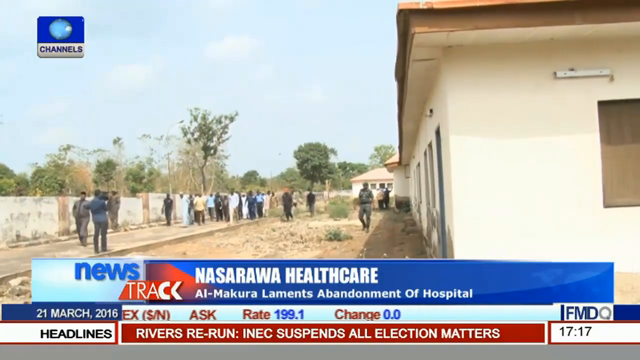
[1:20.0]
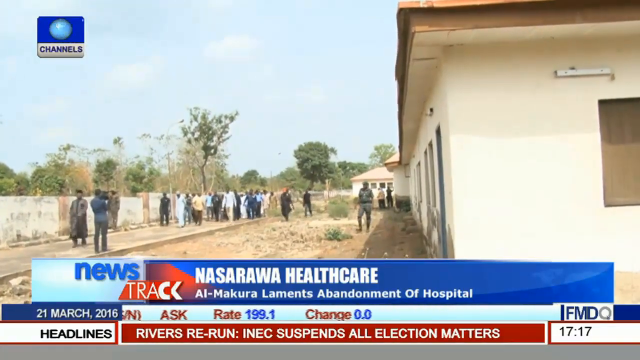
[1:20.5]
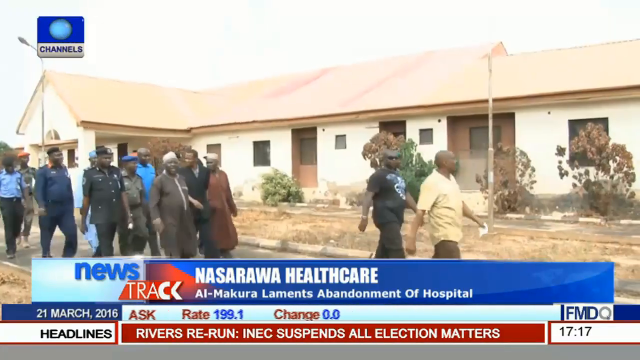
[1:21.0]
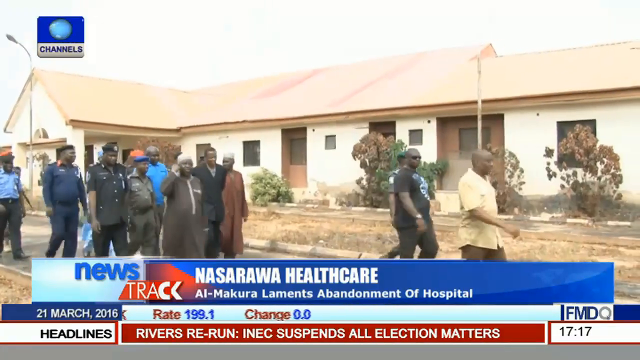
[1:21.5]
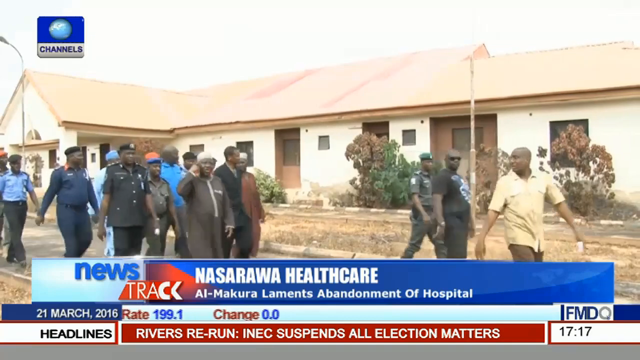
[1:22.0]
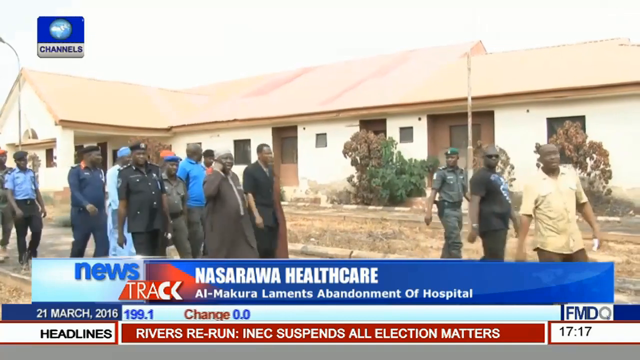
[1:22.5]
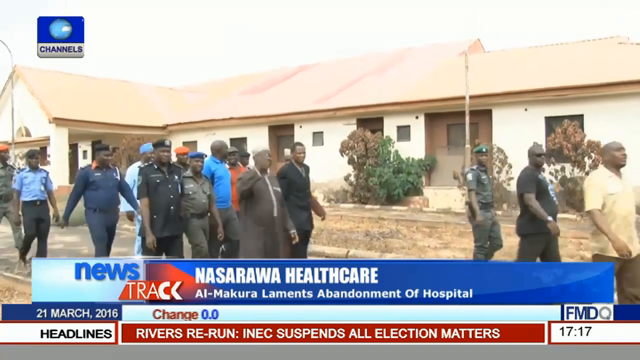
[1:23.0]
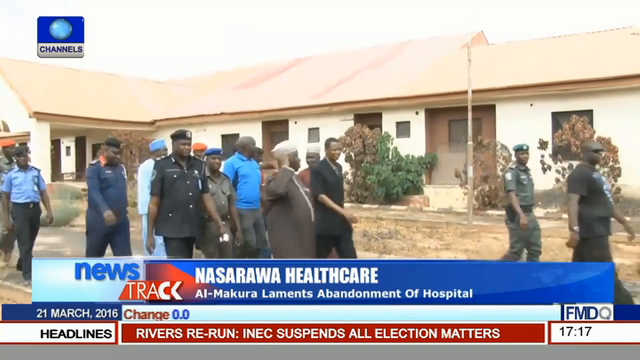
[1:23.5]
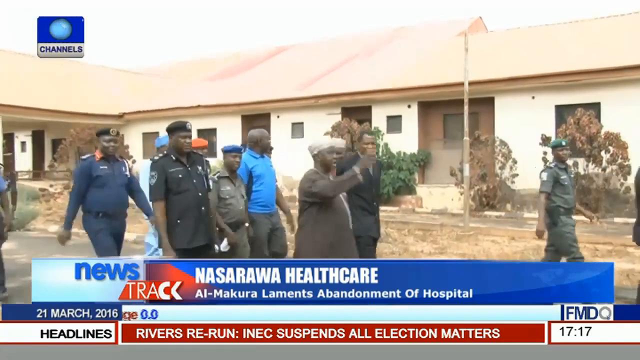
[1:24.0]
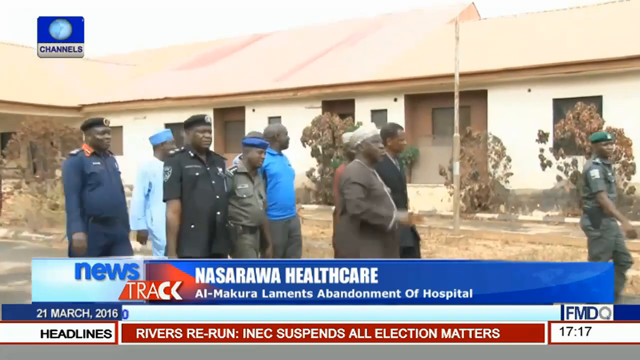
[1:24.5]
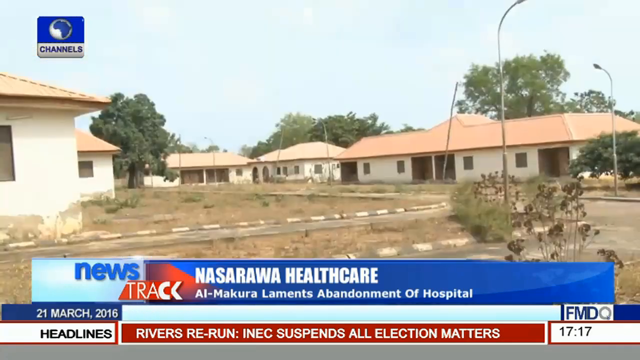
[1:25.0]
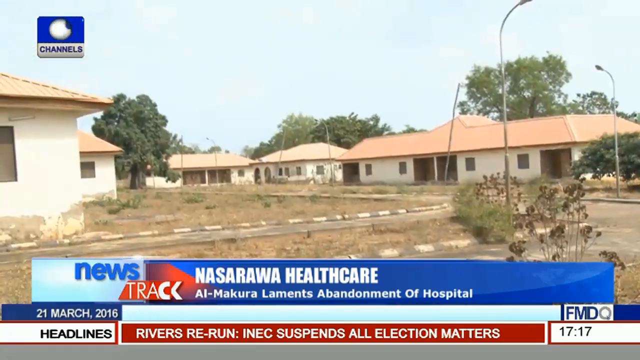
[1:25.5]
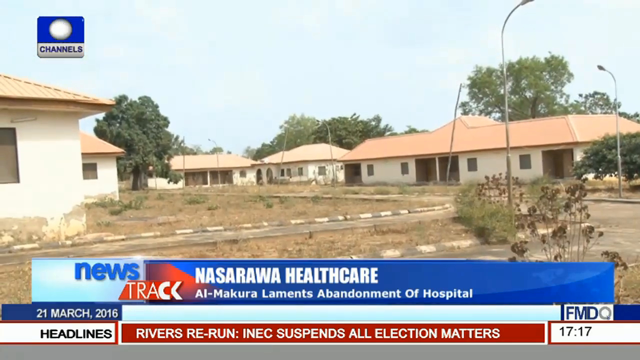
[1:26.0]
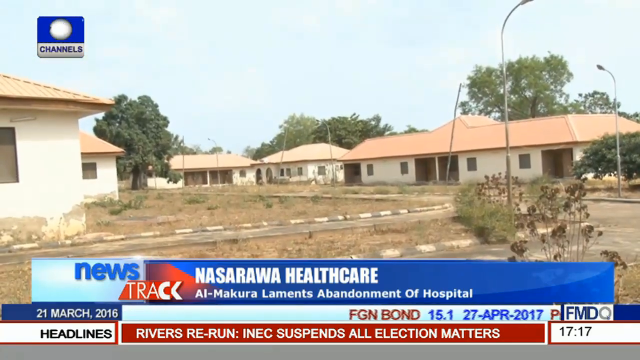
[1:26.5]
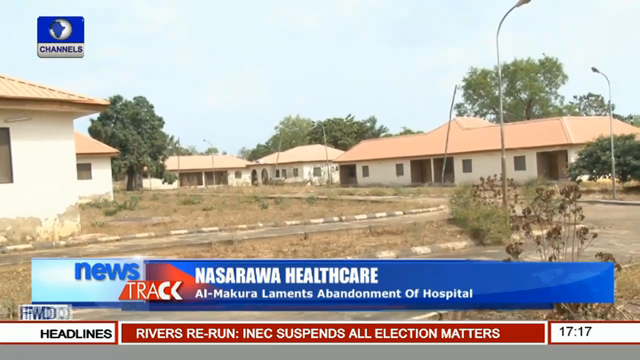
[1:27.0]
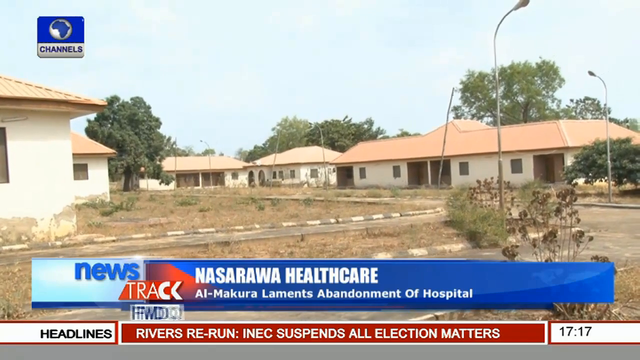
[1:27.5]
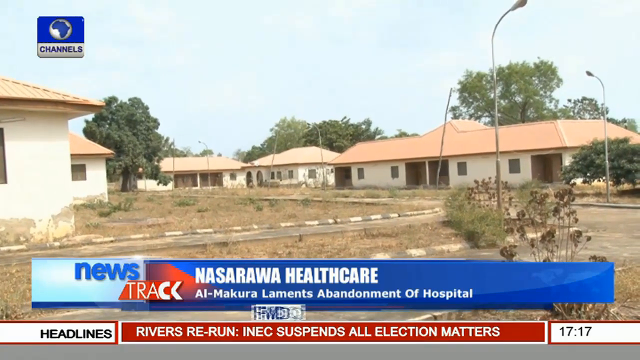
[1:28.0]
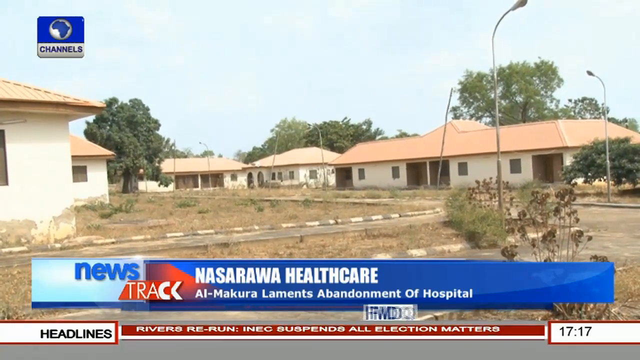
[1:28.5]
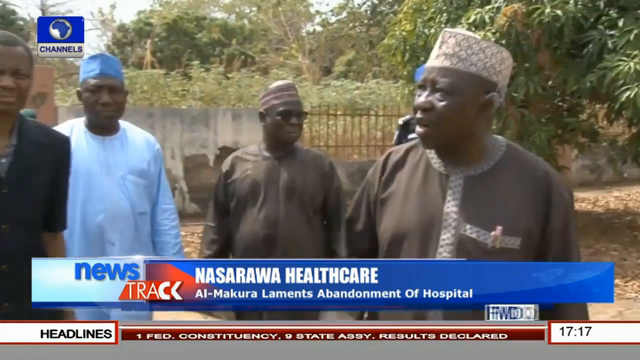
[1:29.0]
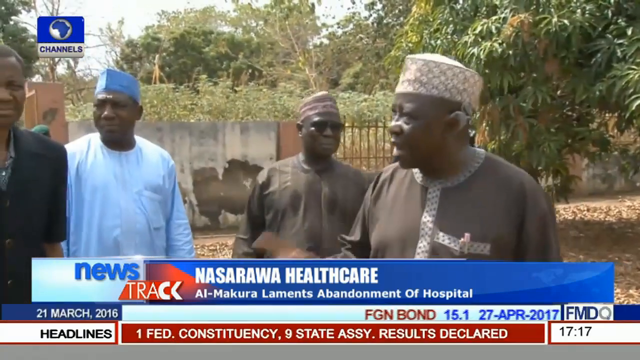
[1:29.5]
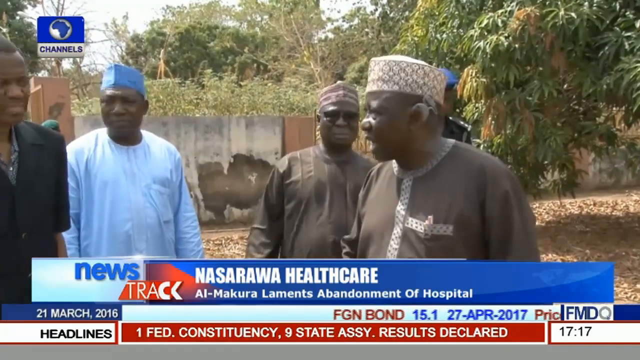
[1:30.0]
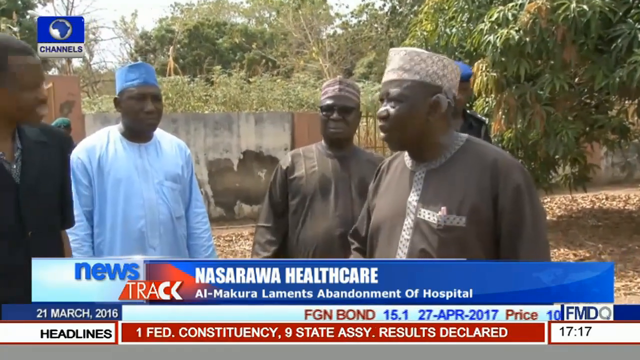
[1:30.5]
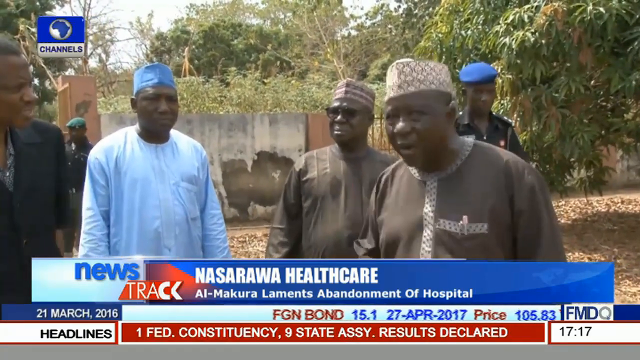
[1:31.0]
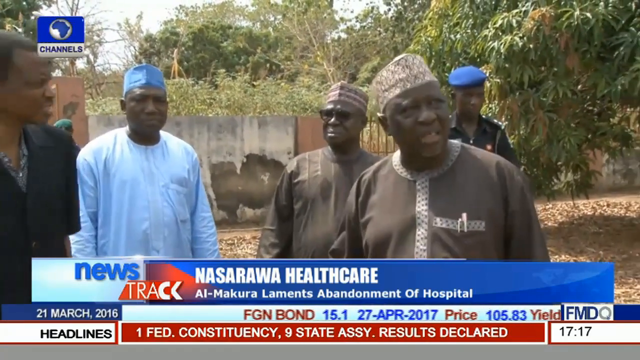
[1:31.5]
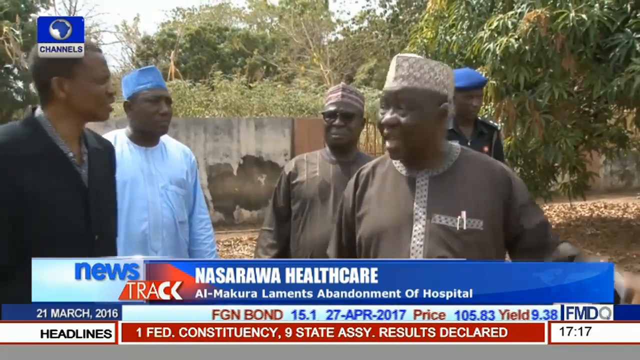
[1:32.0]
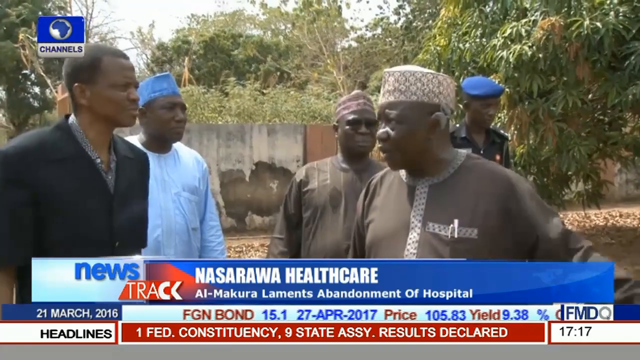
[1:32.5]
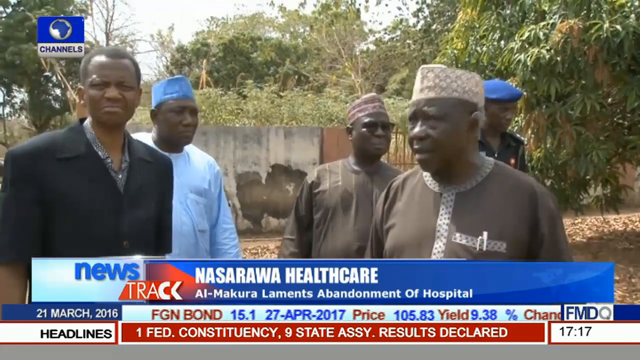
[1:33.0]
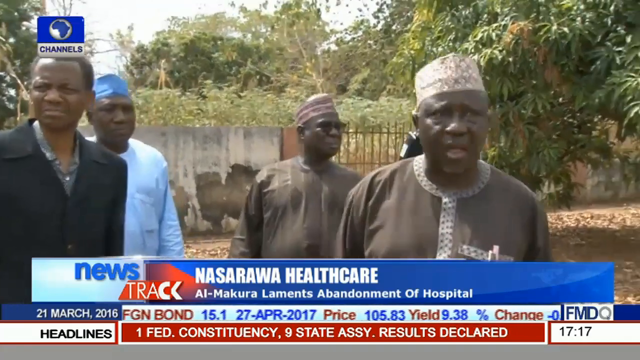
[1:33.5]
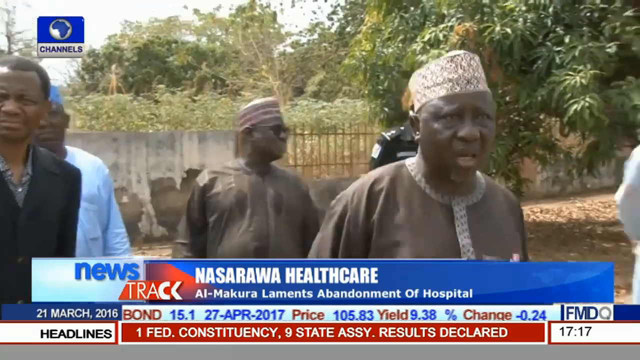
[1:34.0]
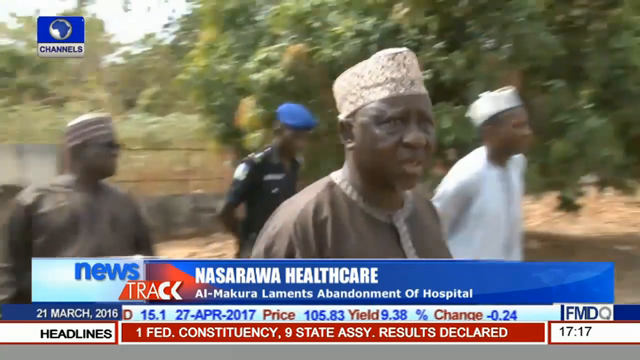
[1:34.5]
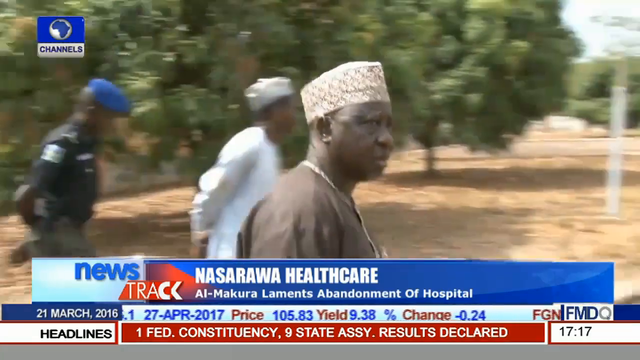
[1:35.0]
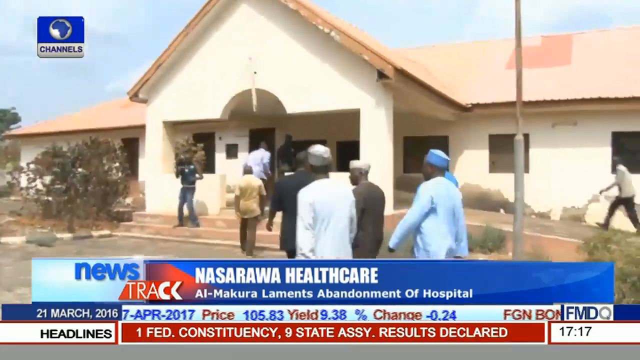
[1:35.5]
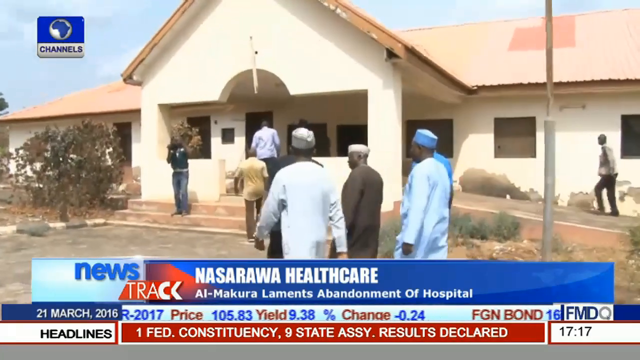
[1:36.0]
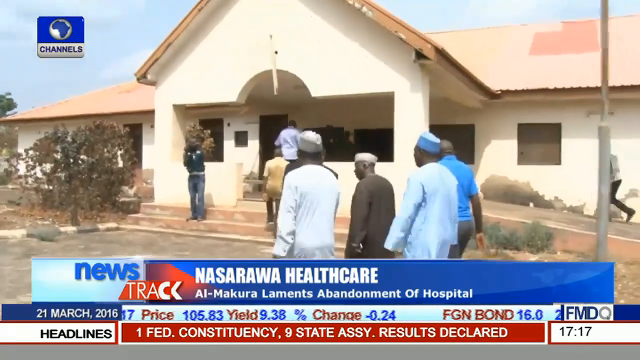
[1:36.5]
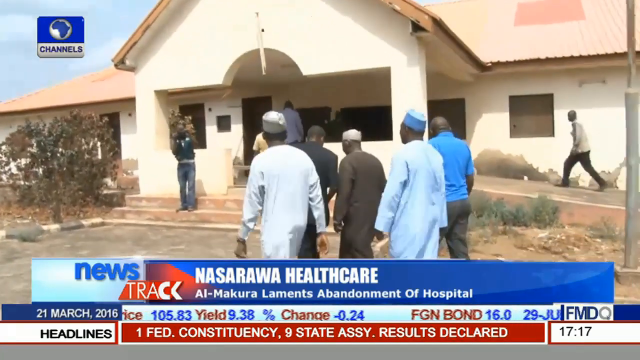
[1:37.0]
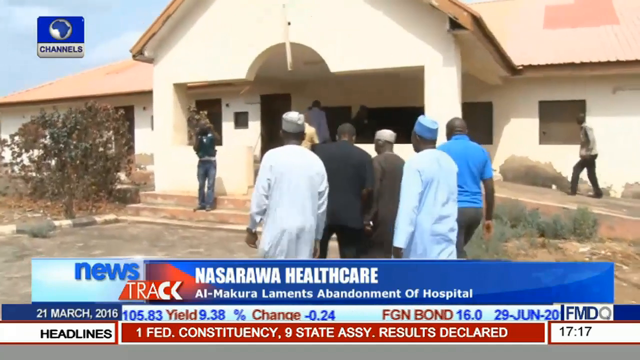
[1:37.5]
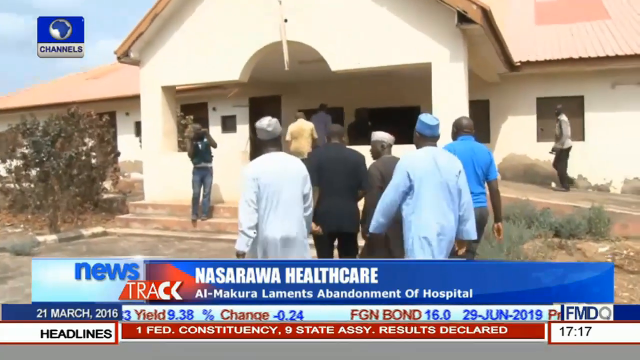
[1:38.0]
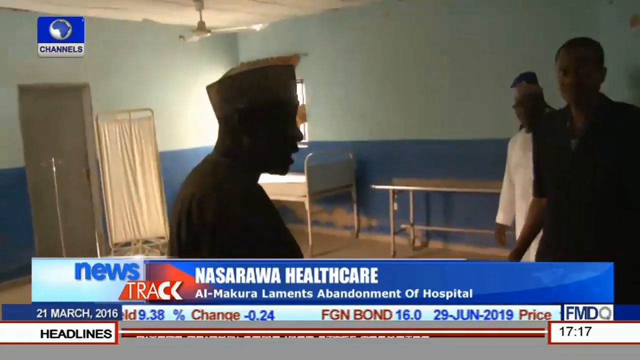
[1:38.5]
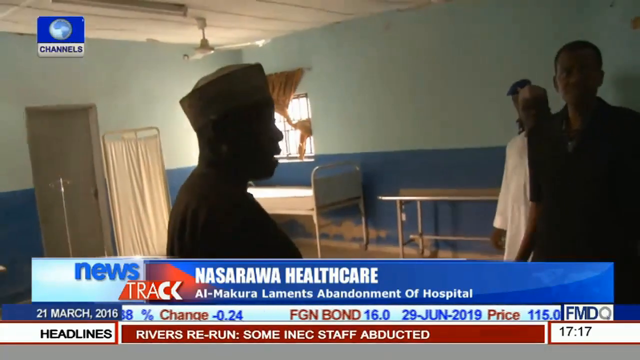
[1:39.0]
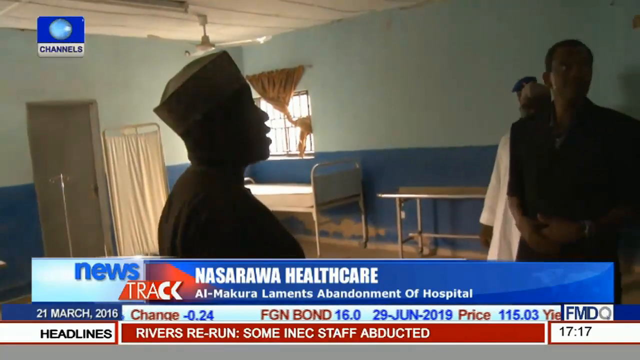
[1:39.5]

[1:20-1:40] The news program refers to healthcare and the abandonment of a hospital. A group is walking, and the camera zooms in as they walk, kind of to the right. Various buildings appear with no one visible near them. The video cuts to a man wearing a hat, as are many others, who appears to be speaking to another man who is nodding. They turn and begin walking. A group approaches a building that looks like a hospital, based on a hospital bed and a room divider, and they are inside this hospital type of space. The man leading the group appears to still be talking to people inside. There are no lights, and it looks like it may have been abandoned, as the headline says; there is not much left but a few basic things in the back of the room.